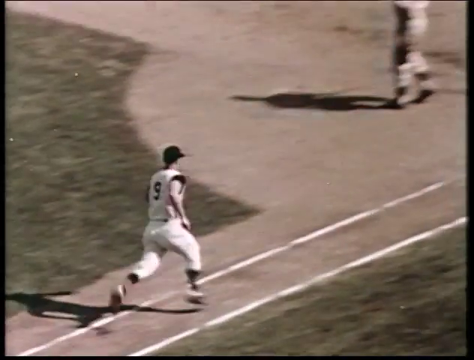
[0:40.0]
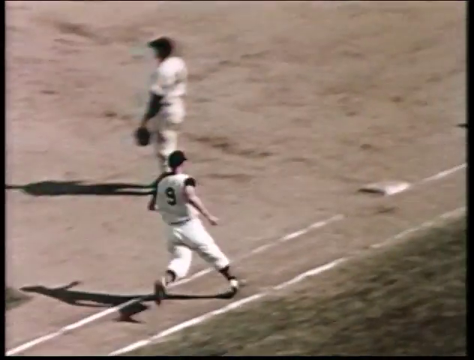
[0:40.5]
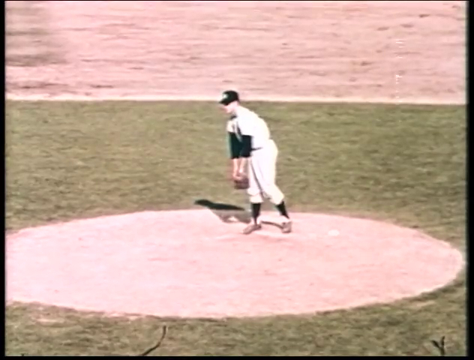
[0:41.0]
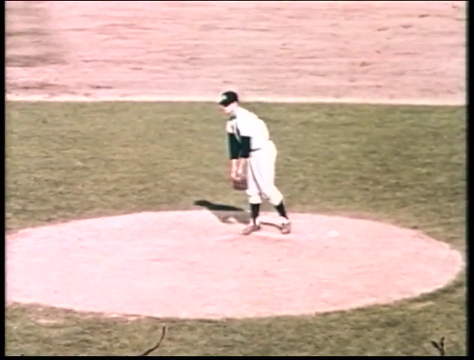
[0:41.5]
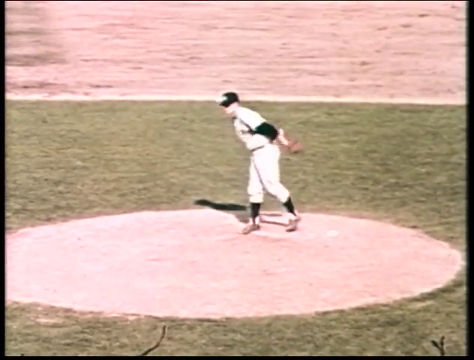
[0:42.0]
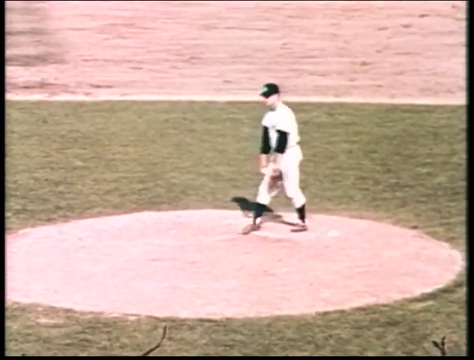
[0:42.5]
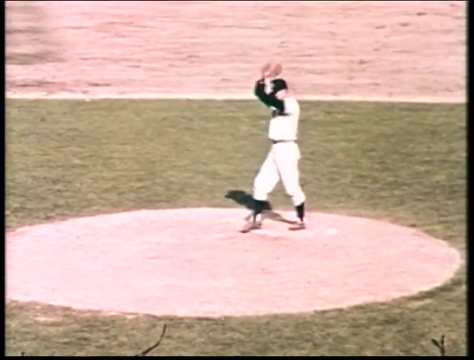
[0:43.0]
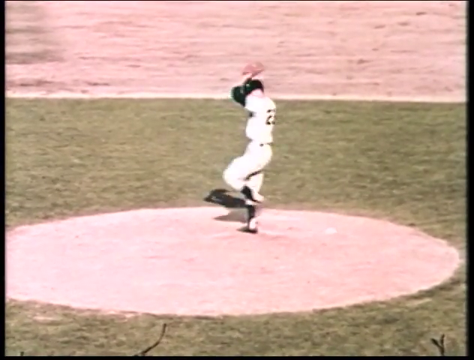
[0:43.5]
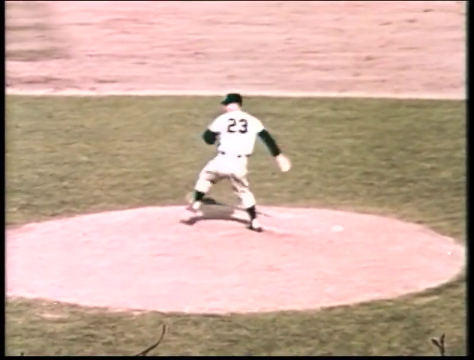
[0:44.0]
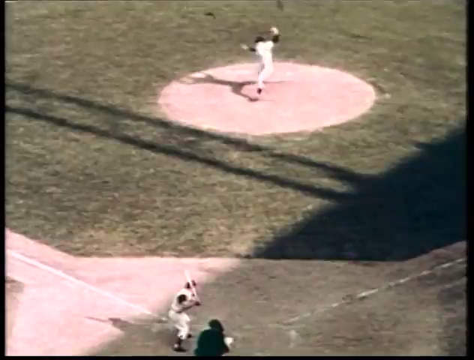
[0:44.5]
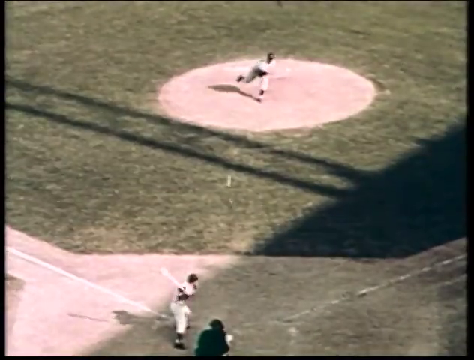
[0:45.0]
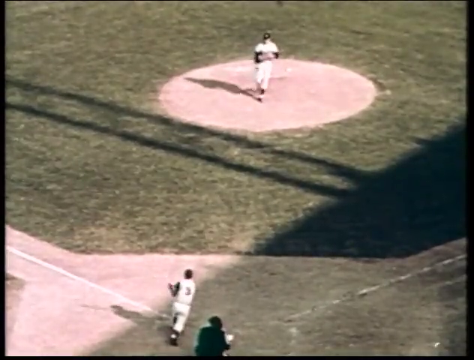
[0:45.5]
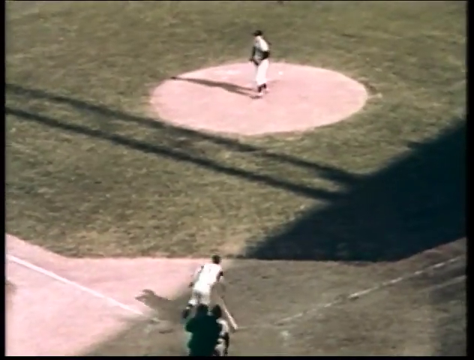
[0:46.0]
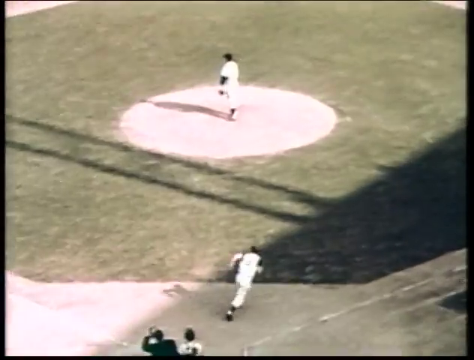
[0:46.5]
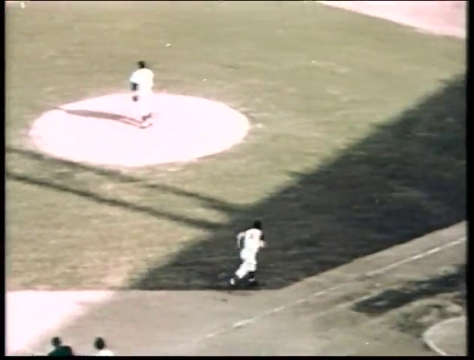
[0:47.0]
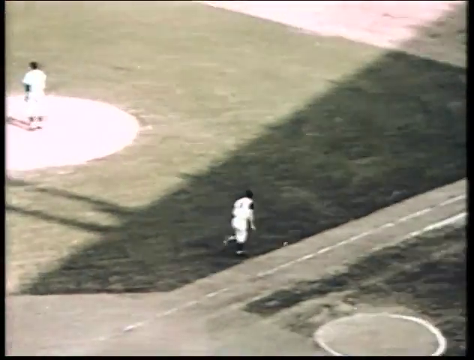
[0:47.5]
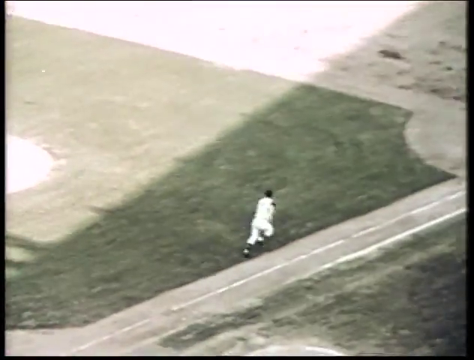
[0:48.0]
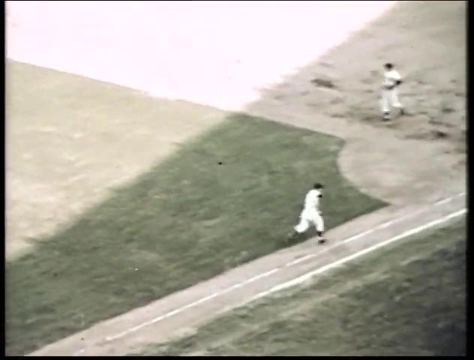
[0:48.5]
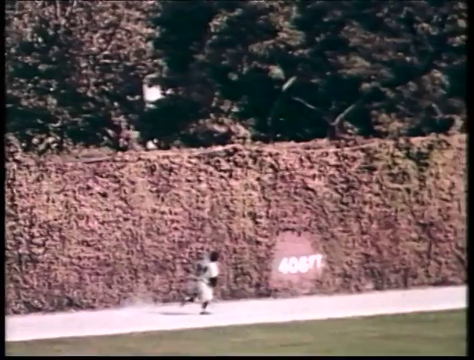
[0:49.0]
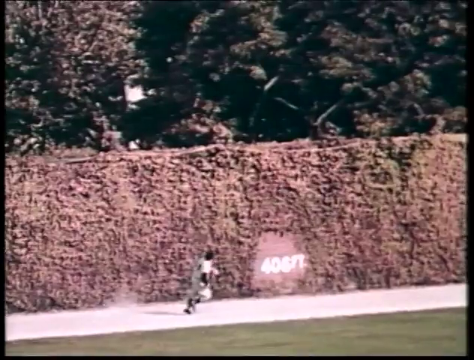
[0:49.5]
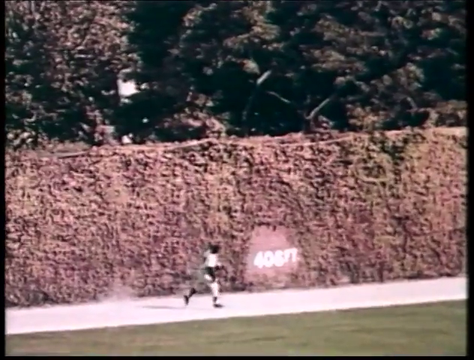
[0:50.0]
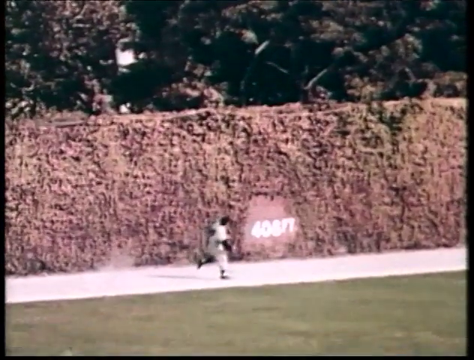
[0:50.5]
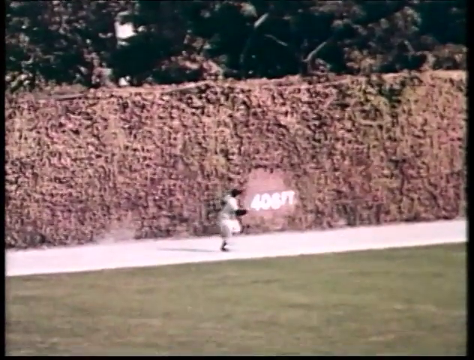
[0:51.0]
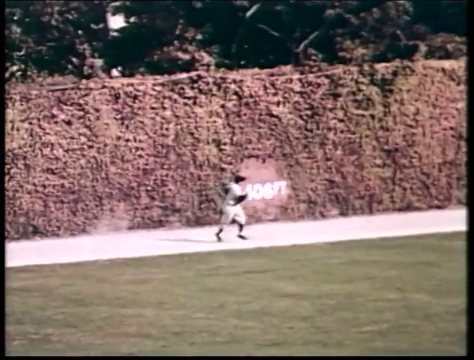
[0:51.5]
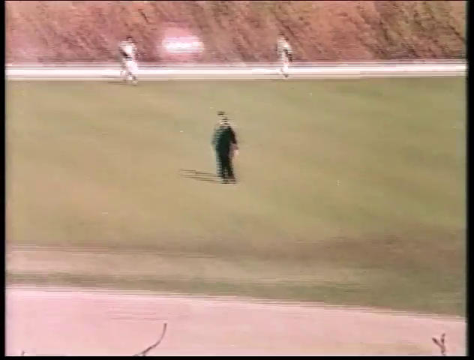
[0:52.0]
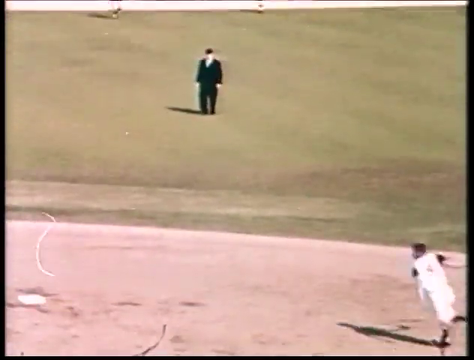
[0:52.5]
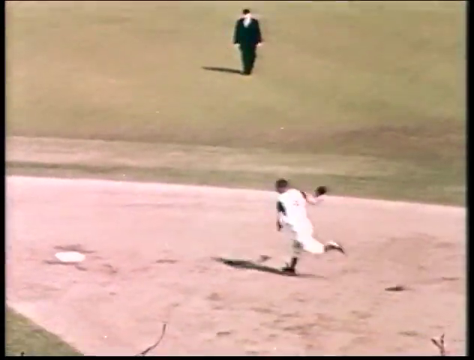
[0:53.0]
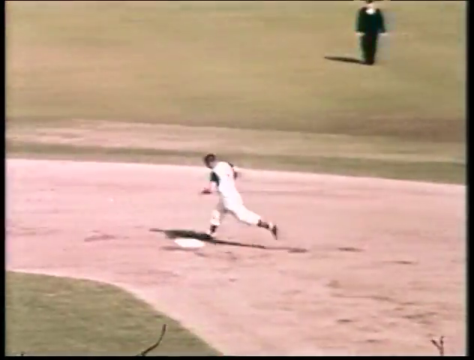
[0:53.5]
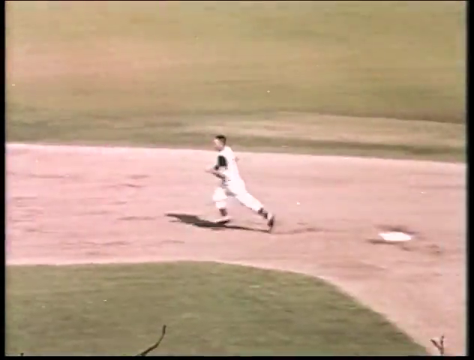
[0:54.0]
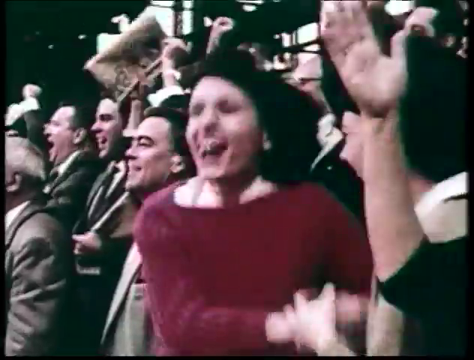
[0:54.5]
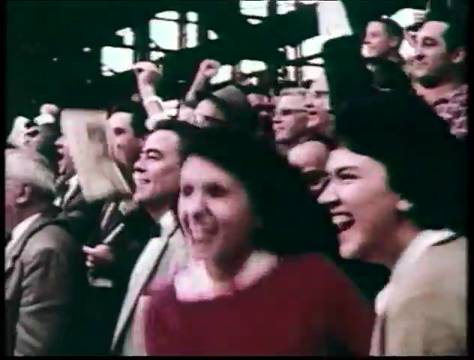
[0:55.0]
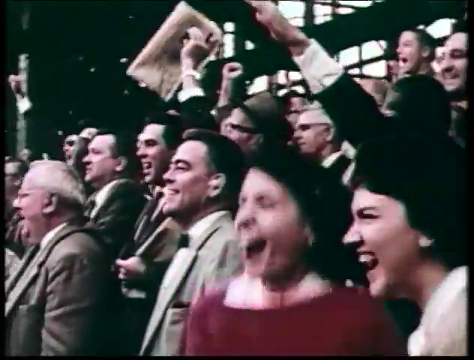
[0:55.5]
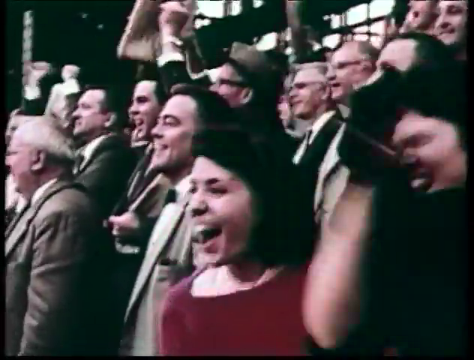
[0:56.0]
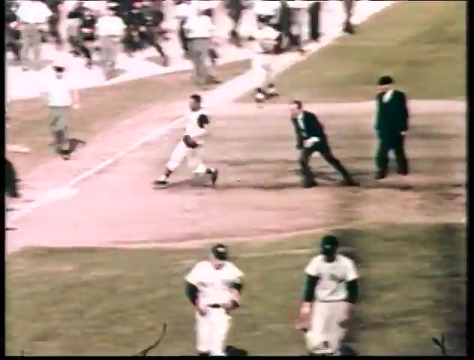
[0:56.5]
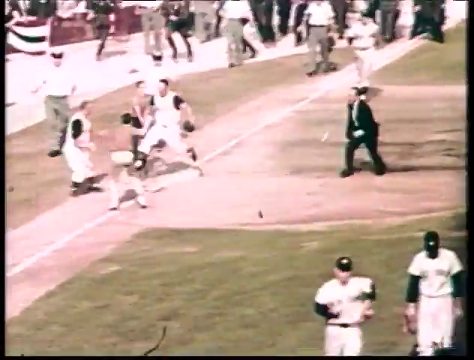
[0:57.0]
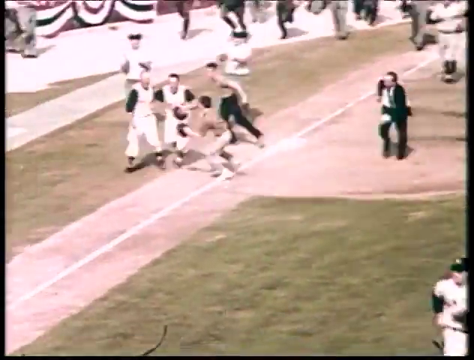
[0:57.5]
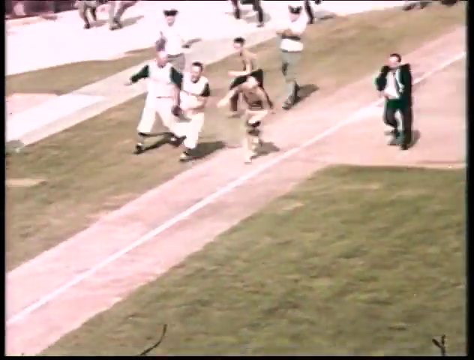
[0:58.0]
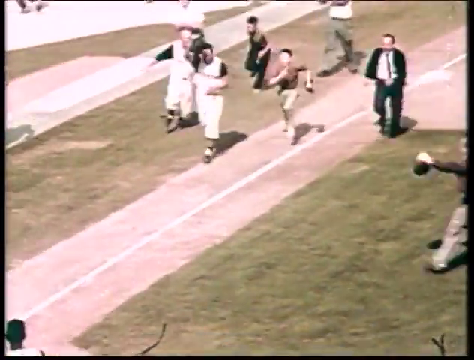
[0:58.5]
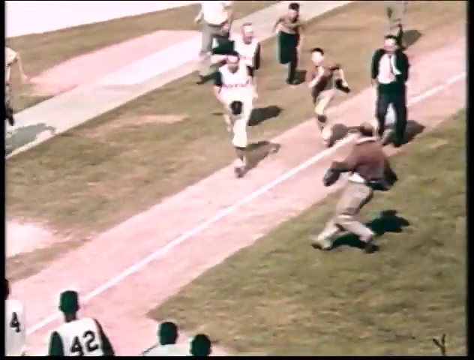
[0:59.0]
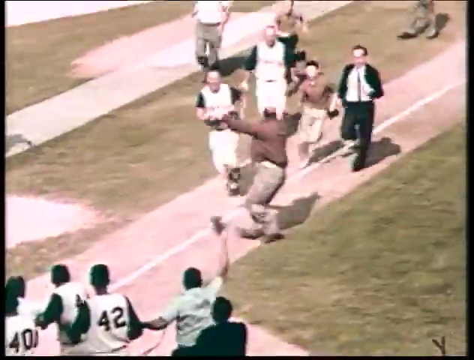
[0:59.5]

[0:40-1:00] The batter, number nine, in a white uniform and black cap, rounds the bases, with green patches of grass on the left and right, white lines, and gray dirt as he approaches first base. The pitcher is shown in black long sleeves, a white uniform and a black cap, on a rounded high mound surrounded by grass with brown dirt just behind him. He winds up and throws, and number nine at the plate smacks the ball, which looks to go over the brown weeded fence into green trees in the background as the outfielder watches it go over the wall. An umpire in a black suit and black cap stands in the middle of the green field. Number two lifts his cap off and celebrates as he rounds second base, while a crowd of people jumps up and down. He rounds third as a number of people jump over the stands and run onto the field, and he comes into home plate across the green grass and brown dirt for what is most likely the winning home run.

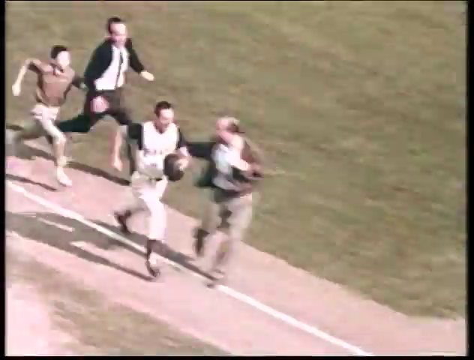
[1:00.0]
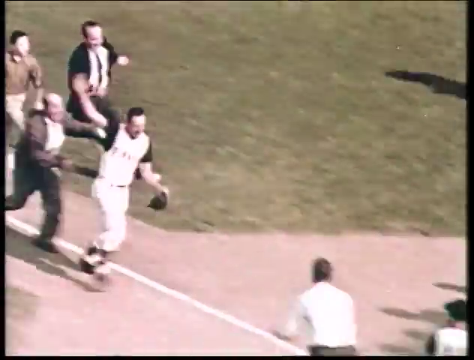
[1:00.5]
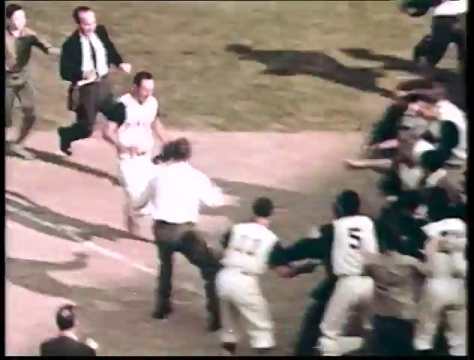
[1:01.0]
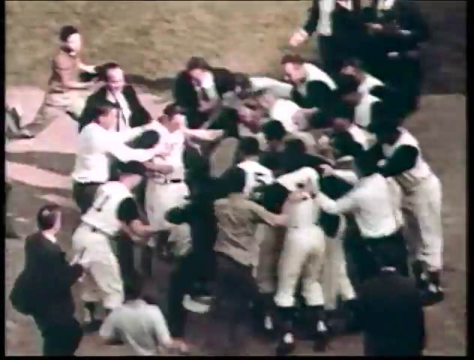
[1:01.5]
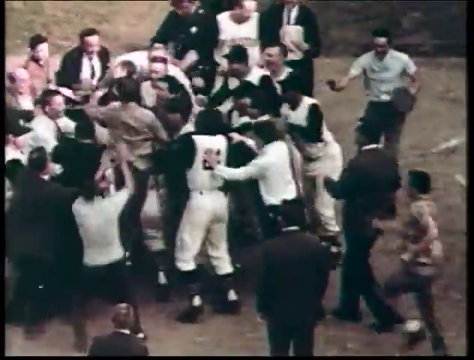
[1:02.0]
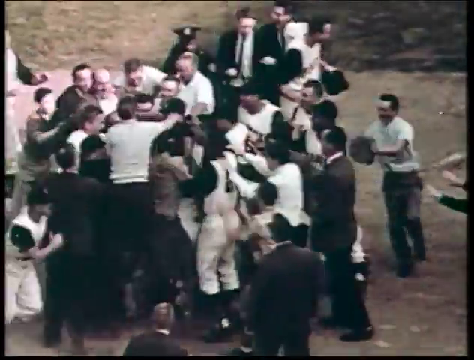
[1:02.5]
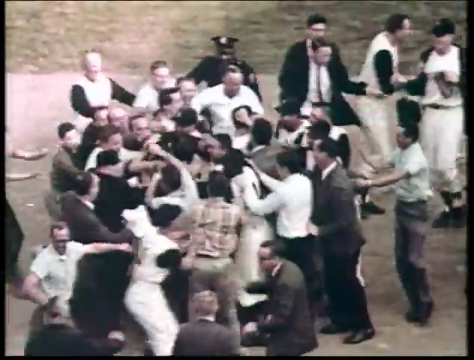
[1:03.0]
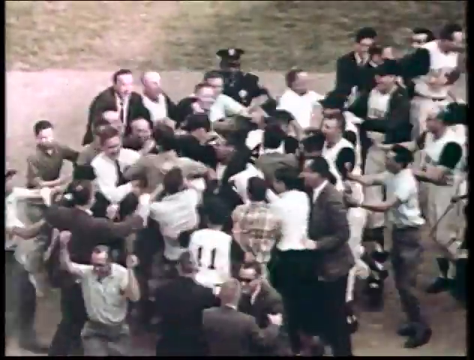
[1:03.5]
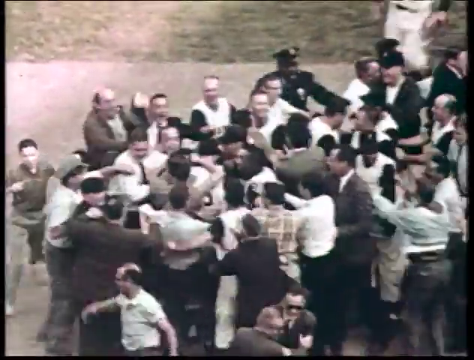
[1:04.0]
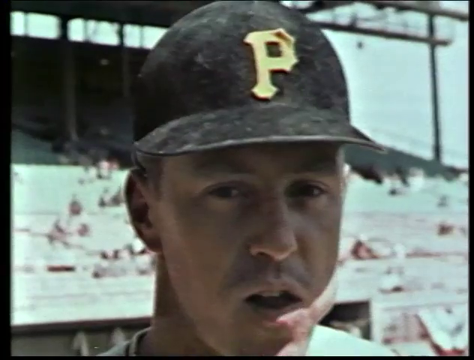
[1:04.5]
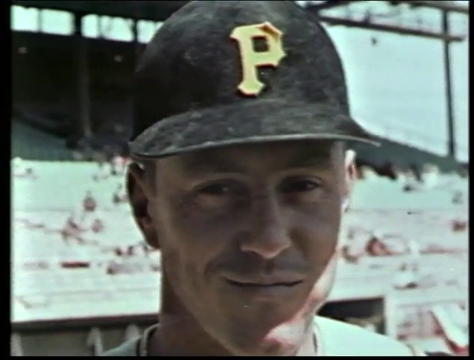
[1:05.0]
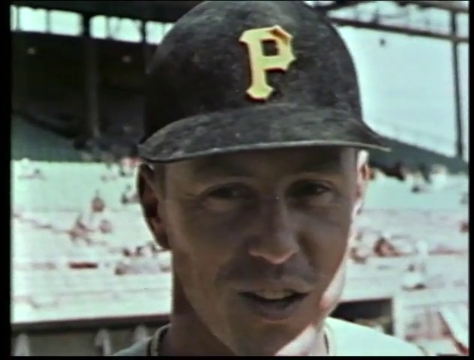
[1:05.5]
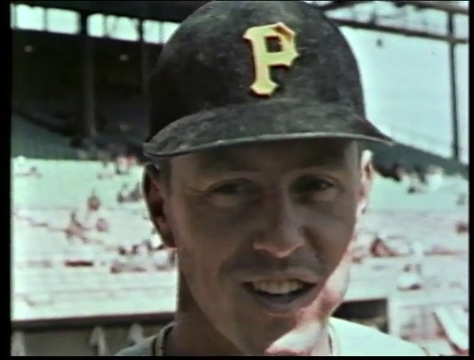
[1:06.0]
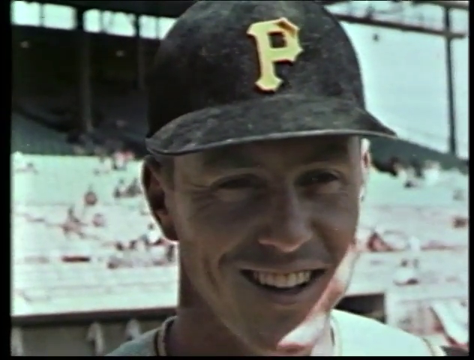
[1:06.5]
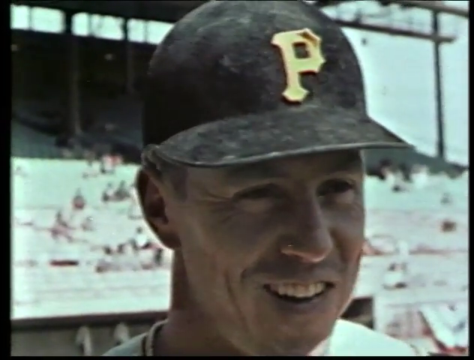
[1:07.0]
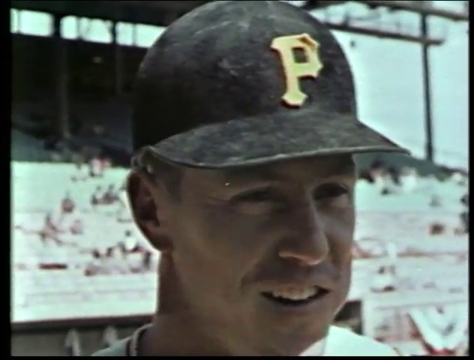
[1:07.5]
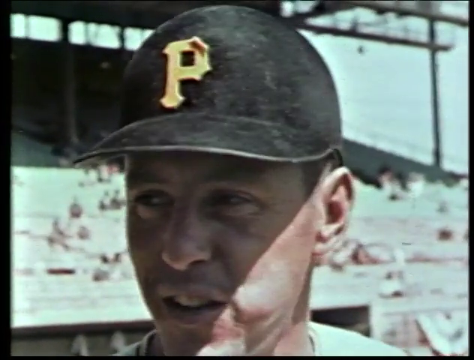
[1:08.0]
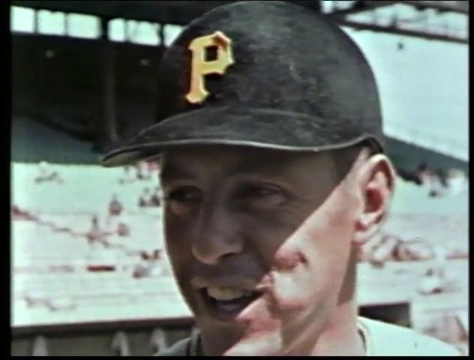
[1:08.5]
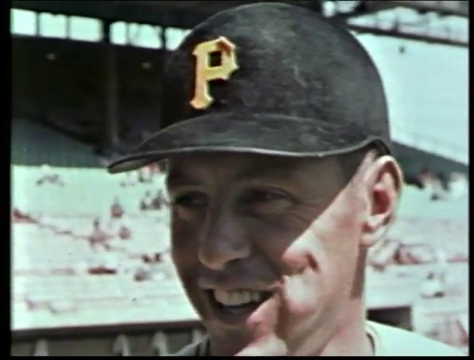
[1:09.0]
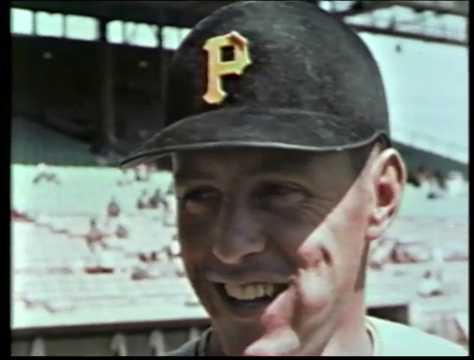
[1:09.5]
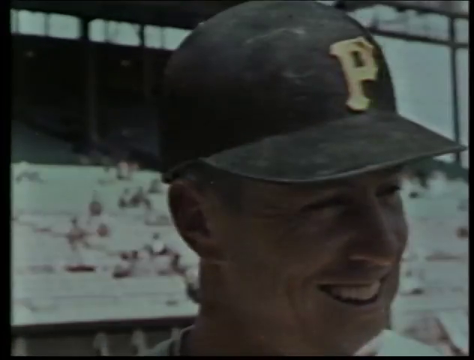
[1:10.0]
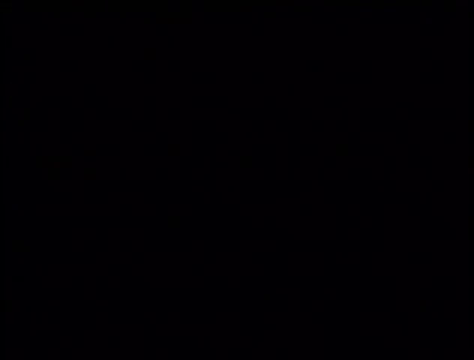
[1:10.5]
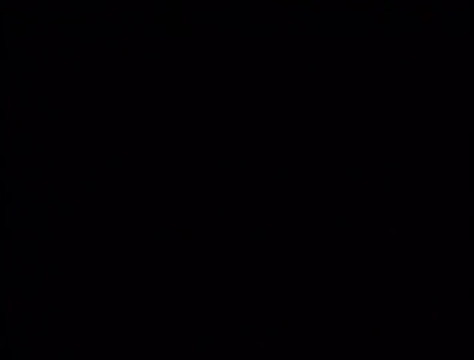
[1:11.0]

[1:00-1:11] A green field is off to the right side. Four people are in the frame: the batter, with a white complexion, wearing white with black sleeves; a gentleman on the right side running up to congratulate him; and an older man and a boy running behind. The batter joins his teammates, and a number of fans have also spilled onto the baseball field. A close-up view then shows a white male baseball player wearing a black cap with a yellow P on the front. In the background is a near-empty baseball stadium in grey, with a few fans sitting among empty seats, as he talks and has a good laugh.